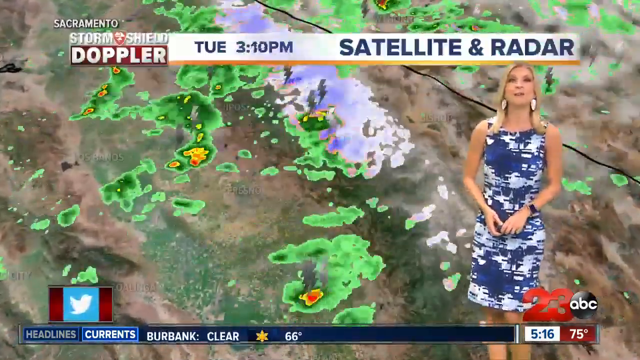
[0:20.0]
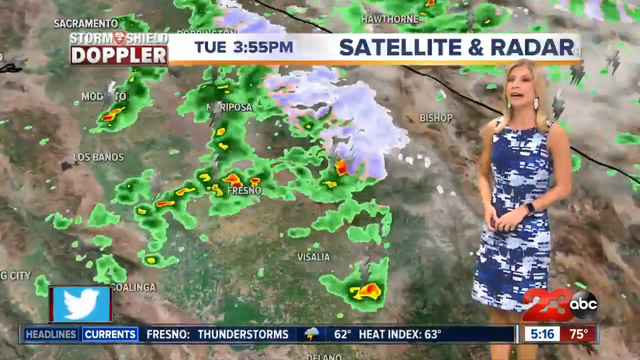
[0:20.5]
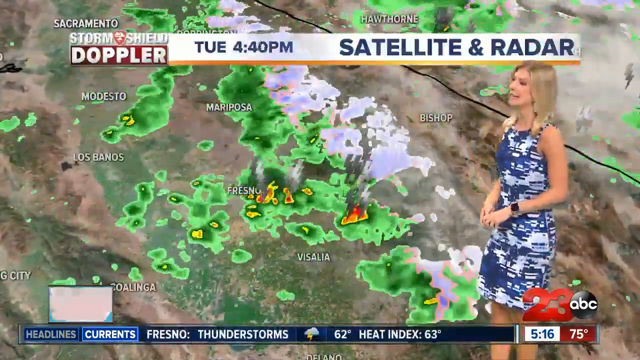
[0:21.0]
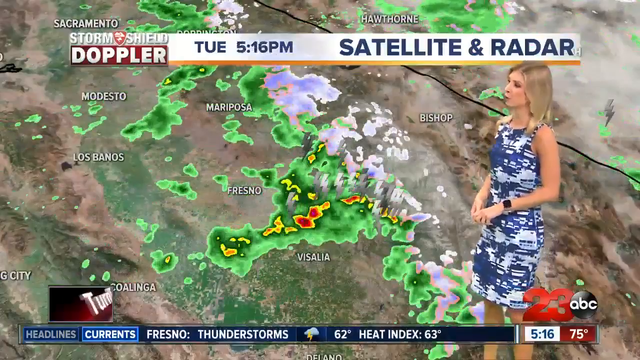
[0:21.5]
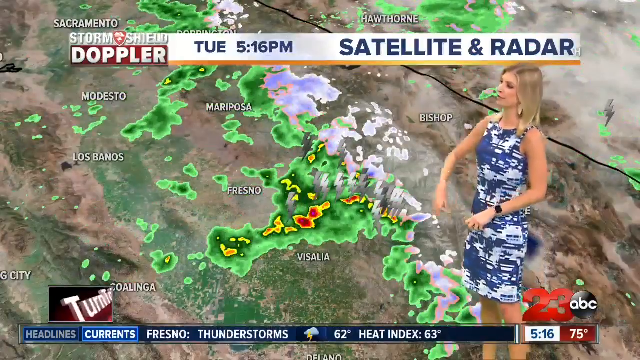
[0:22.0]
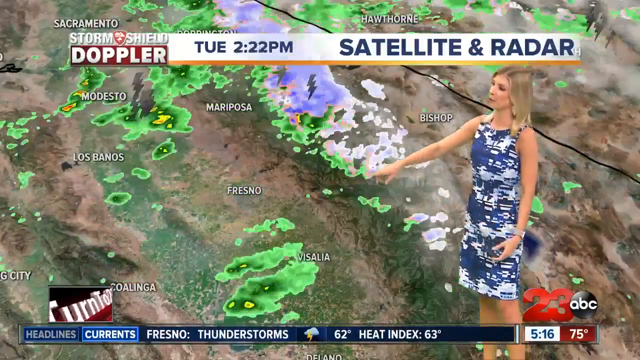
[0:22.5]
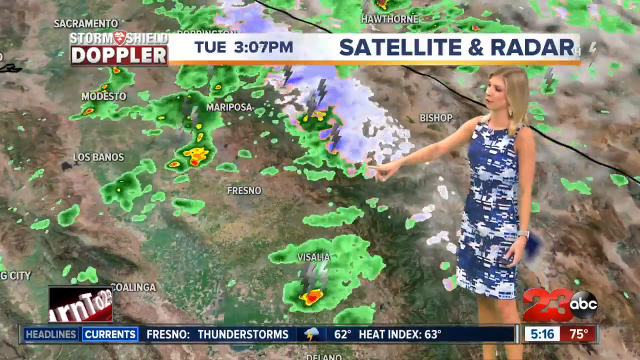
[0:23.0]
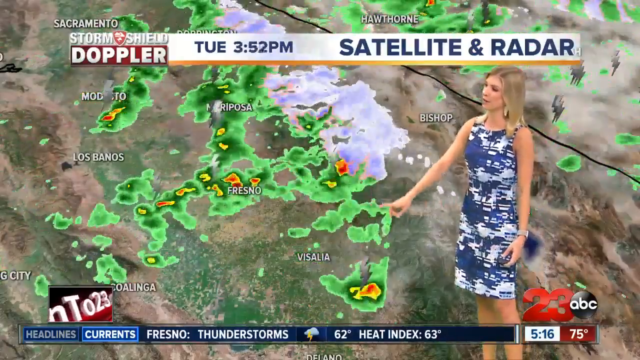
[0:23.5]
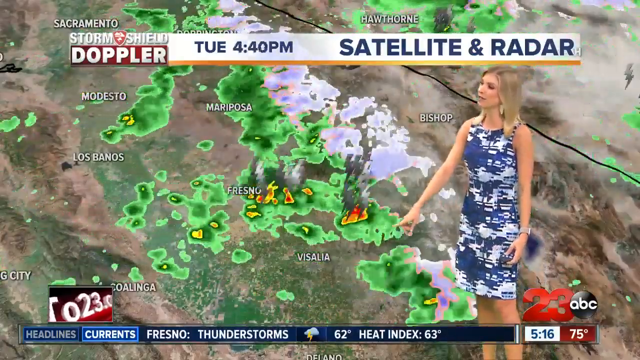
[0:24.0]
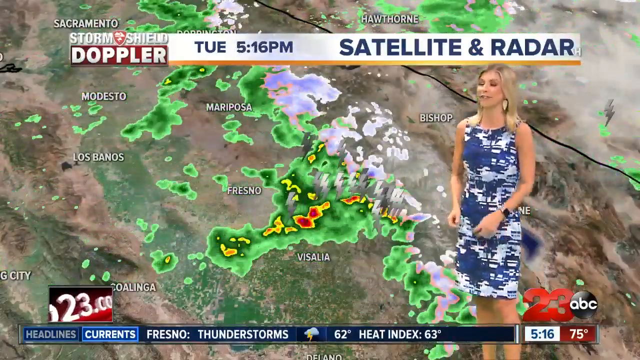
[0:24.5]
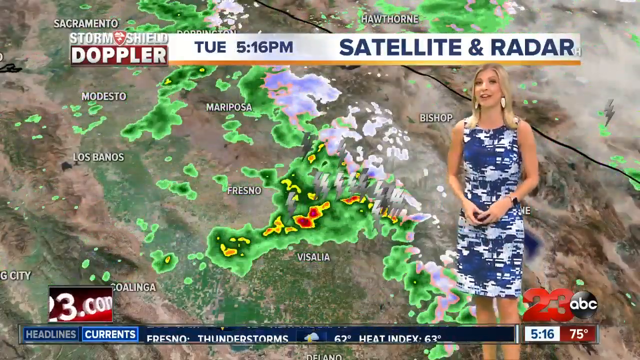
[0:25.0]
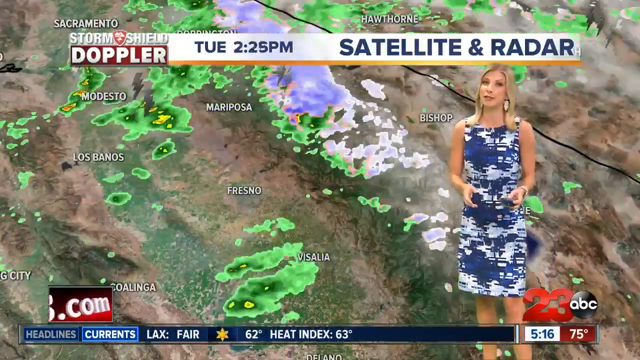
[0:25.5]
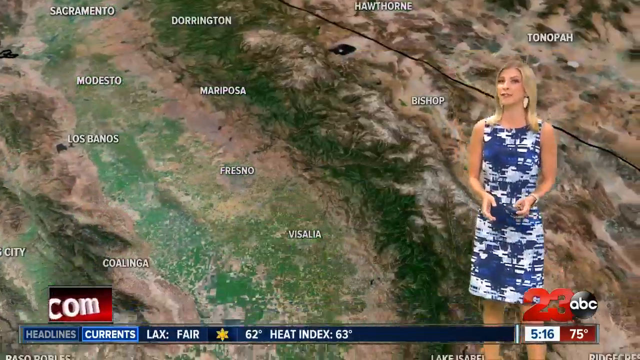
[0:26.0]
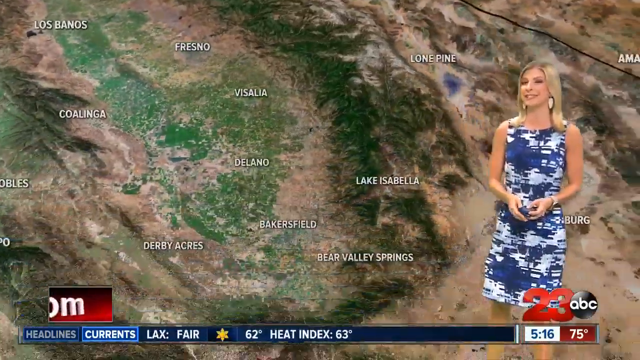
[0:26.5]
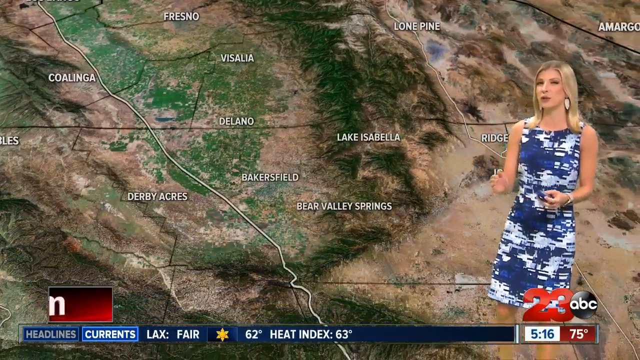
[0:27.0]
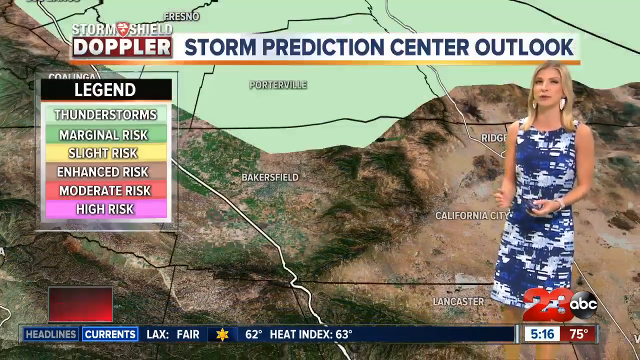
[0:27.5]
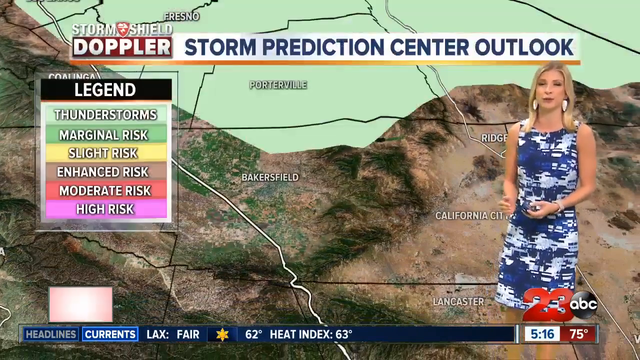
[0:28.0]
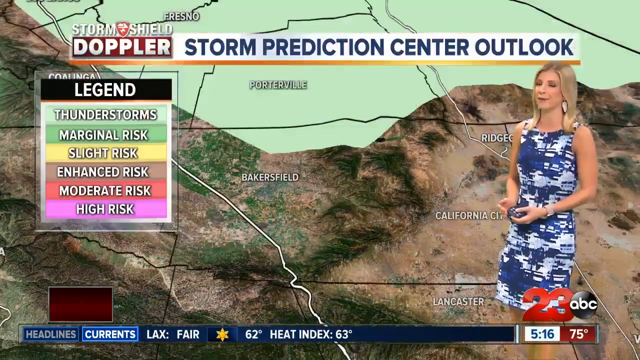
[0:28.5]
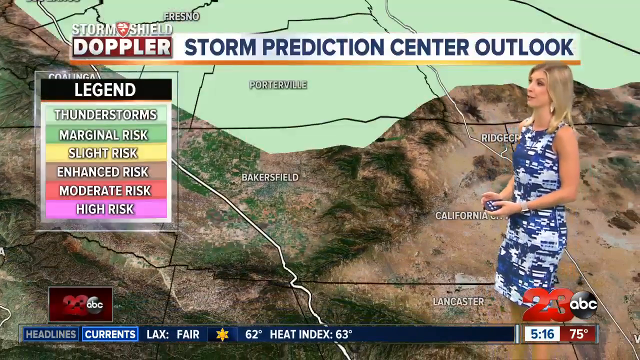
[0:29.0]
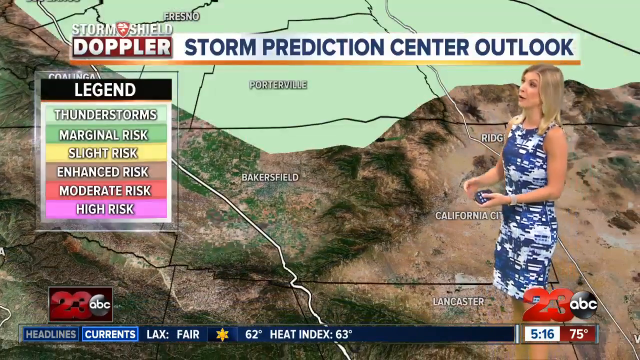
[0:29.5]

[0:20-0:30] The woman is still standing in front of the green screen, which shows a zoomed-in area of California with Modesto, Los Banos, Visalia and Bishop visible. She uses her hands to highlight a storm center over Fresno. The camera moves to what looks like a topographic map, and a graphic pops up reading "Storm Prediction Center Outlook." It is color-coded with a legend: turquoise is thunderstorms, green is marginal risk, yellow is slight risk, brown is enhanced risk, red is moderate risk and pink is high risk. There is a lot of green over Fresno and other cities.